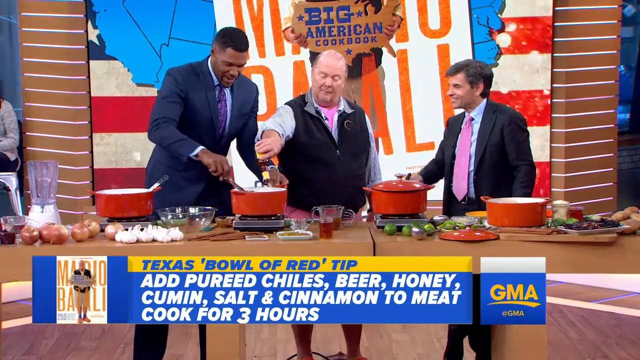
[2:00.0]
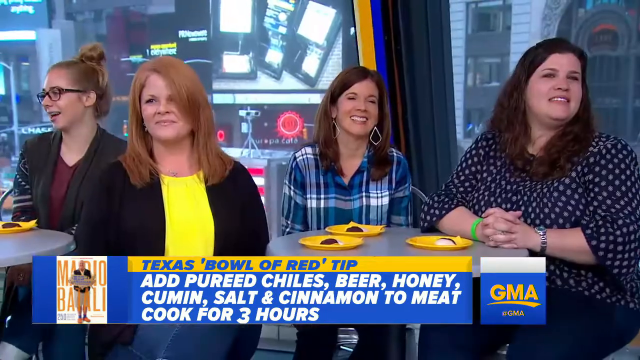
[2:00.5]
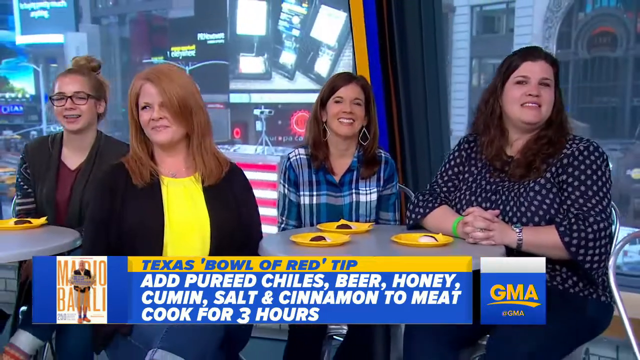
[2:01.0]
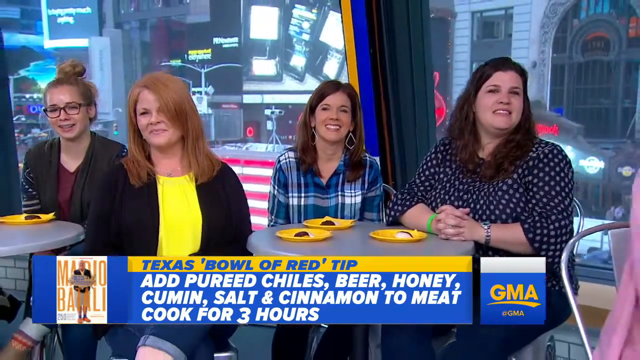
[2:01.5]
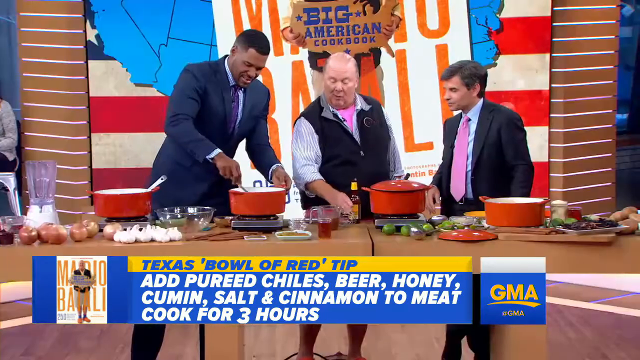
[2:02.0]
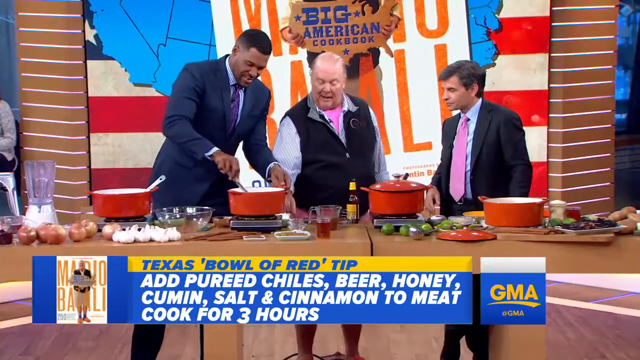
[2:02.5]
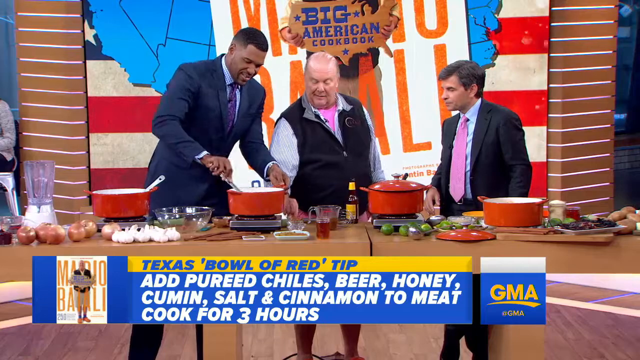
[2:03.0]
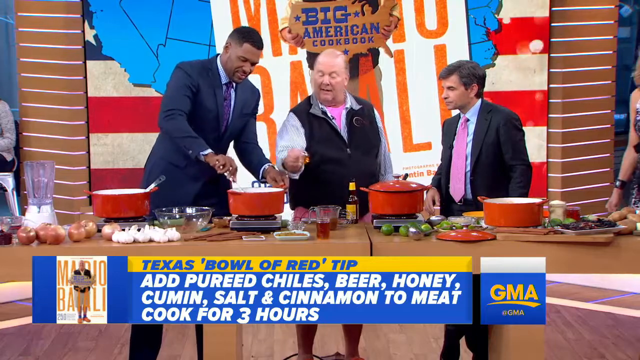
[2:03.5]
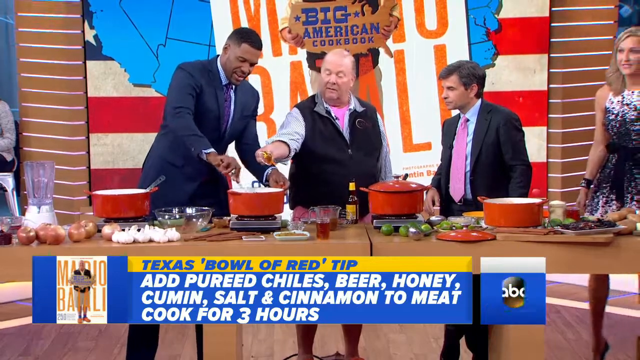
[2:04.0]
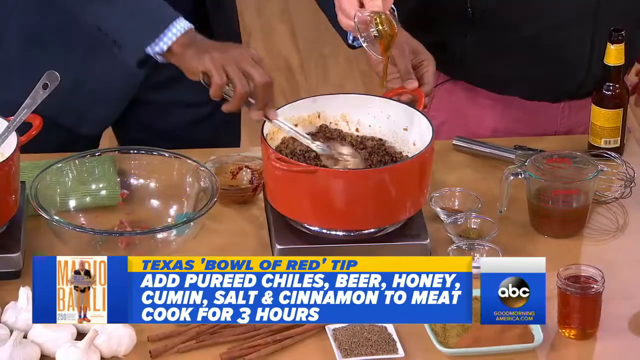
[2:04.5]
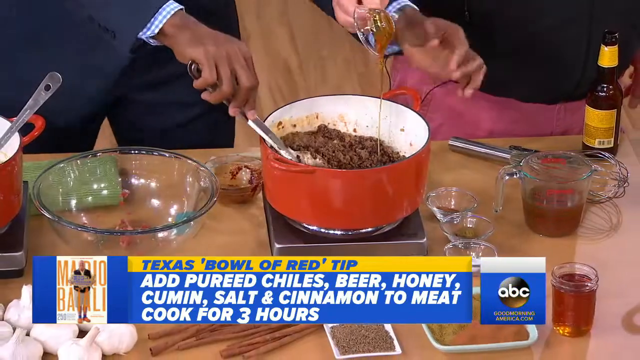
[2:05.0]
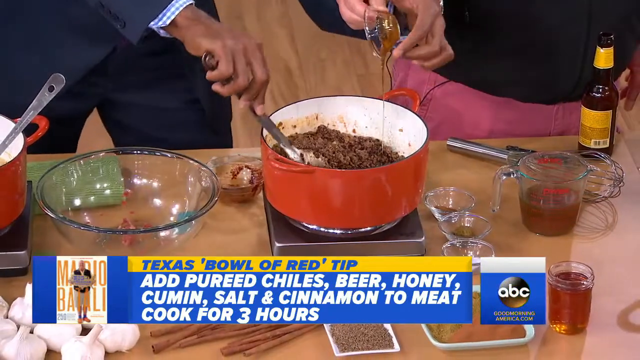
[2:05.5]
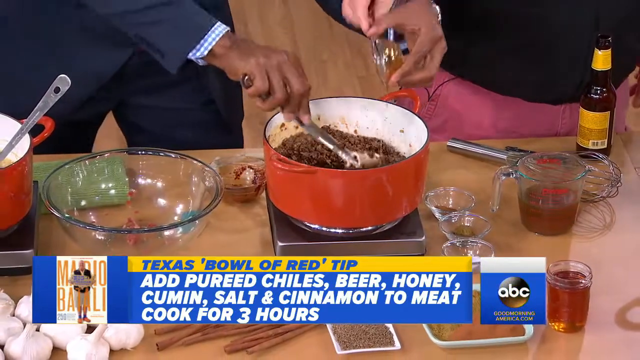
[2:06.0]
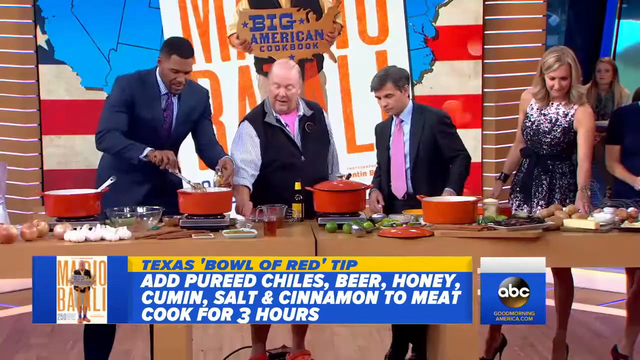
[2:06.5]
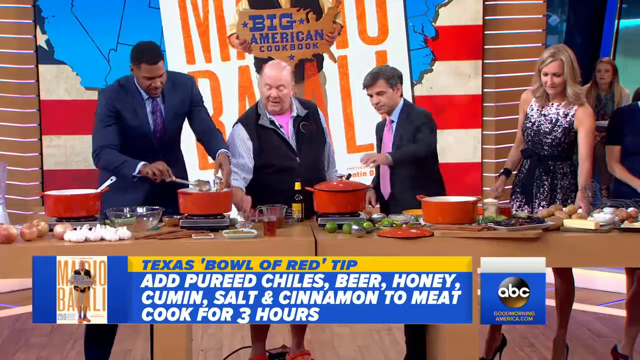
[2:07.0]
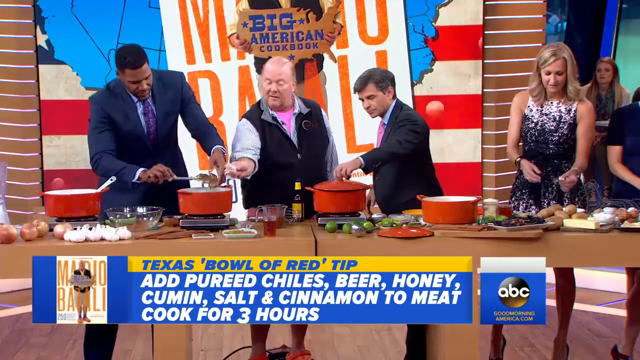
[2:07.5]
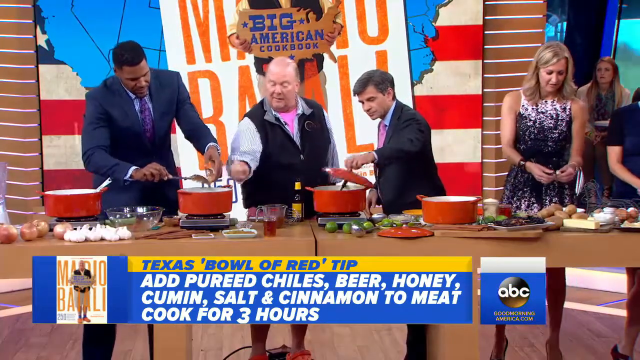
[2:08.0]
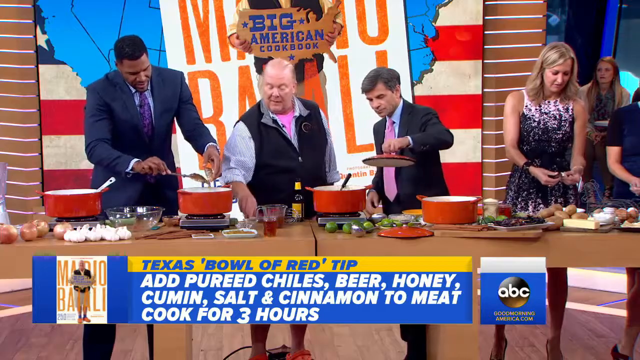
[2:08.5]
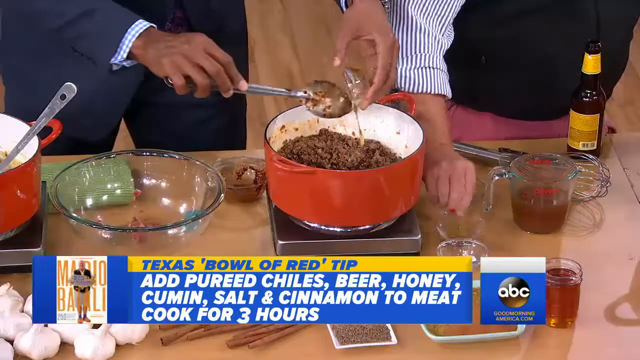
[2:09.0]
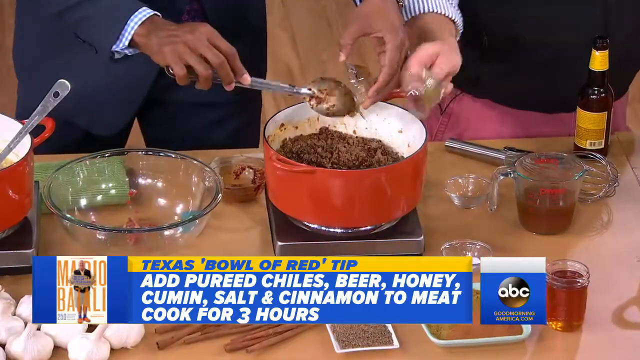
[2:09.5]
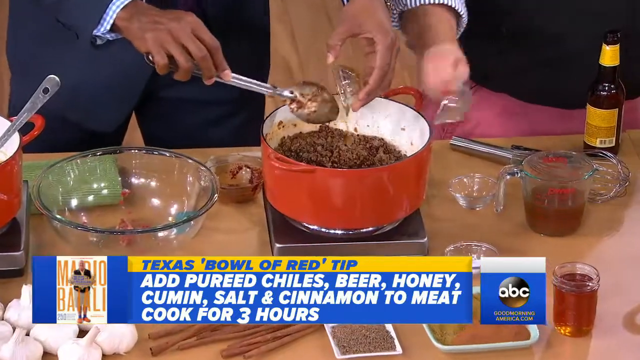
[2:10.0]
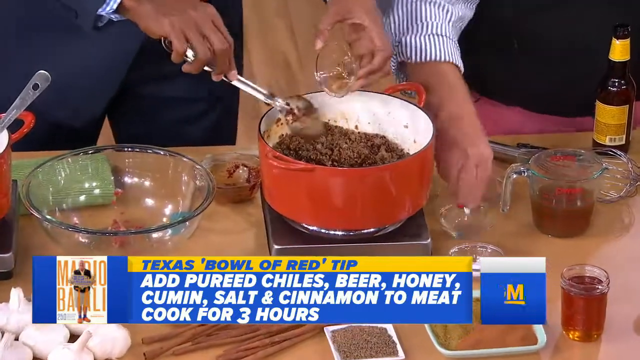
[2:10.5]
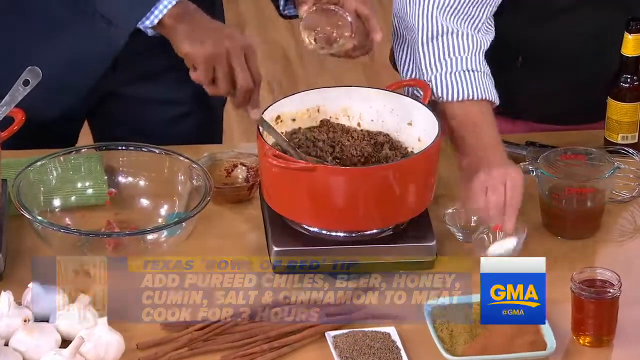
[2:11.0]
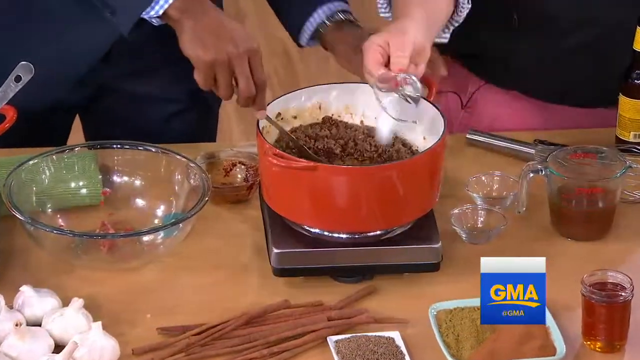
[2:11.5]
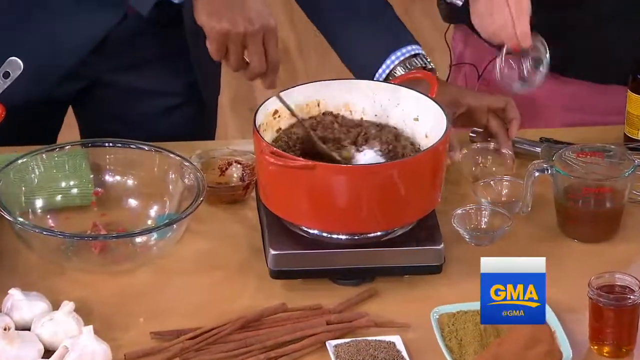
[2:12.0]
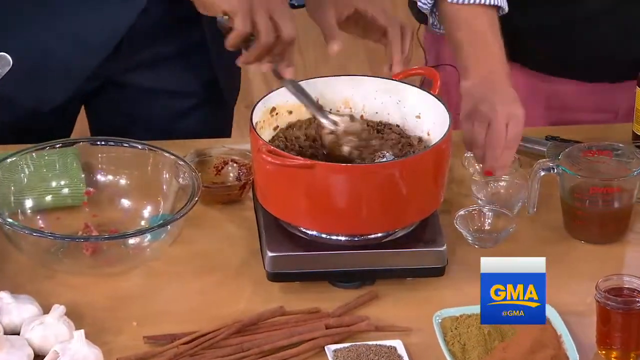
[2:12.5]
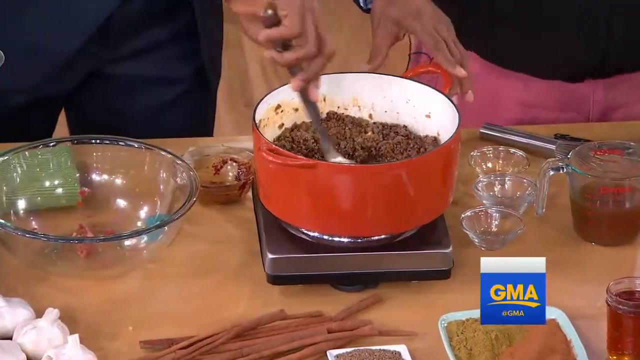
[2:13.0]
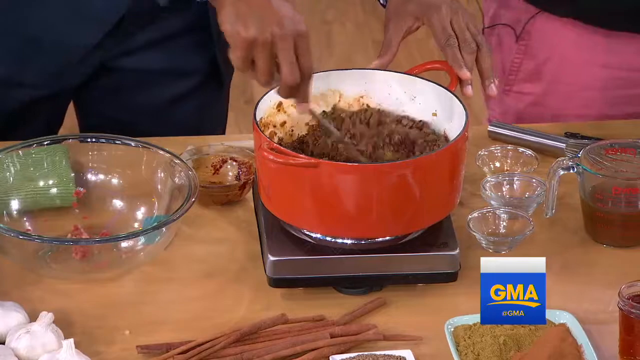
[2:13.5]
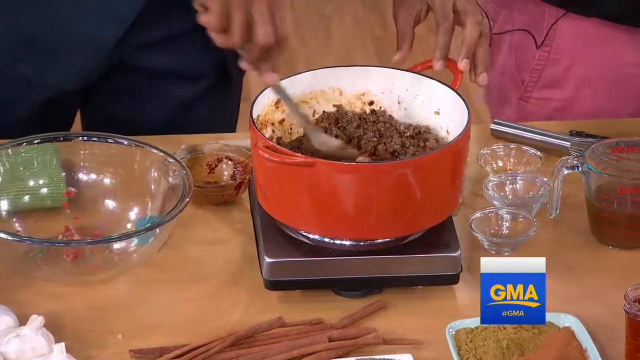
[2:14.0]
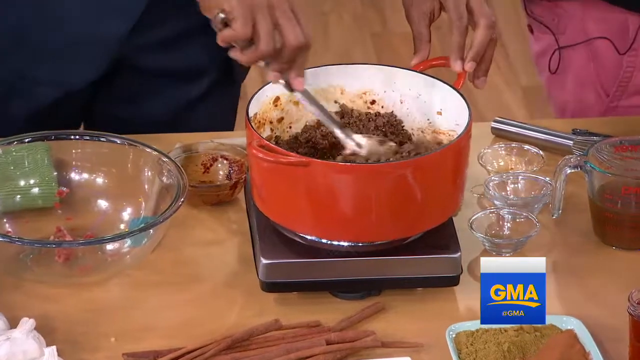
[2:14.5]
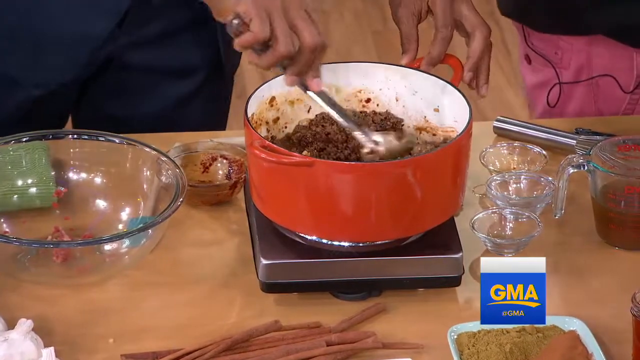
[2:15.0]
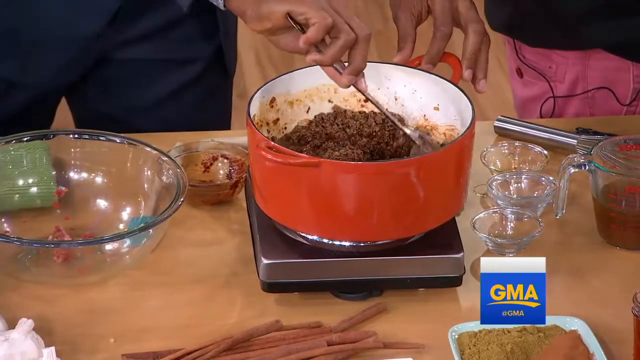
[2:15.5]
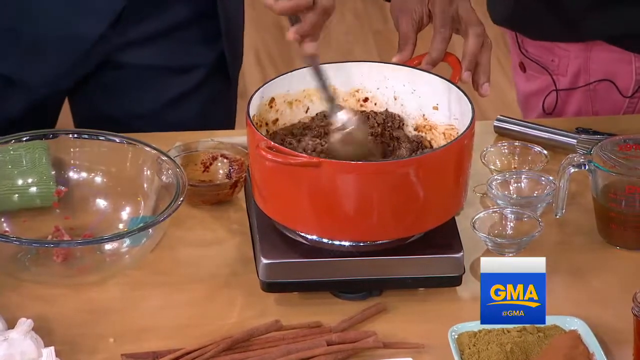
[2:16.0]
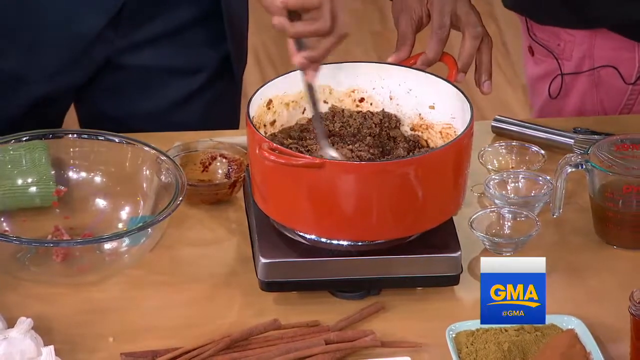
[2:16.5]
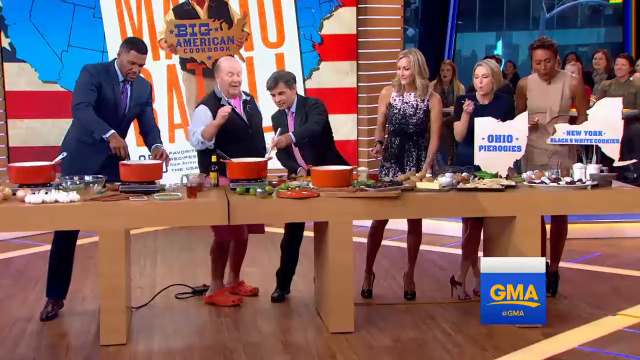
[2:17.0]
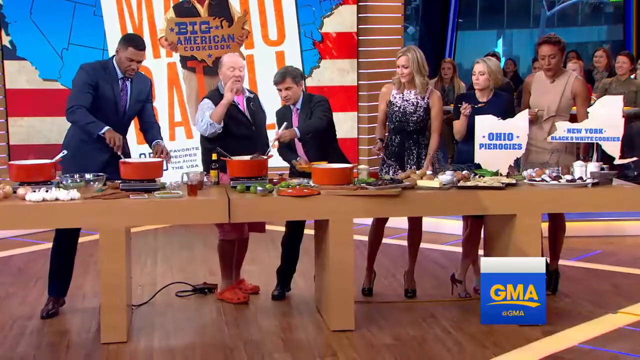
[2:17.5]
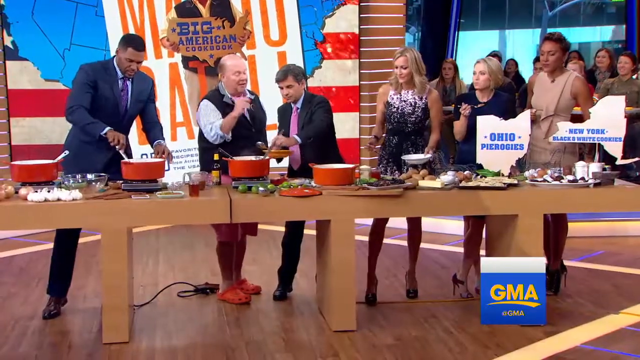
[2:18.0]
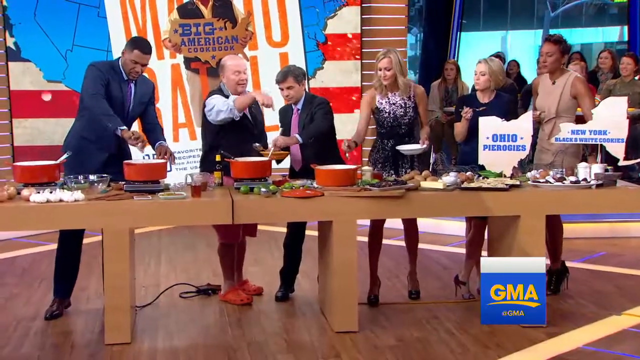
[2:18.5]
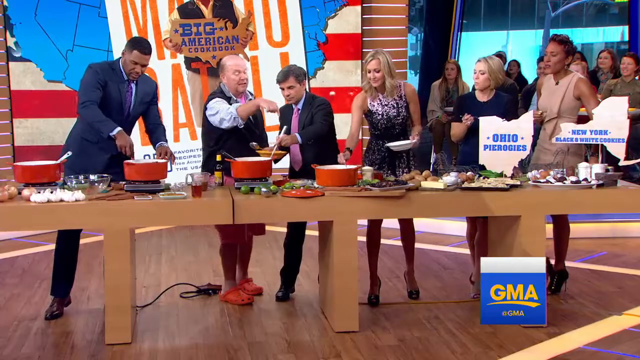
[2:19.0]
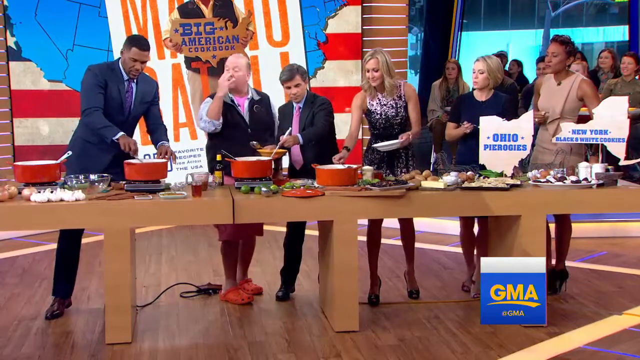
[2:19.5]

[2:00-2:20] Three women sit at a table, each wearing distinctly different clothes: one is blonde and two are brunettes, and one wears a yellow shirt, one a plaid shirt, and one a spotted shirt. They have plates for food on the table, and all are smiling. The camera pans back to the three hosts cooking at the table. The tall African-American man stirs the pot with his right arm, clockwise and counterclockwise, while his left arm is on the red pot as it cooks. The man in the center pours ketchup or some kind of red sauce onto the center. A woman walks in from the right, looking at the potatoes, as the Caucasian man in a suit takes the pot and removes its lid with his left arm. The man in the center uses his right arm to put two cups of seasonings into a pot that is being stirred clockwise.